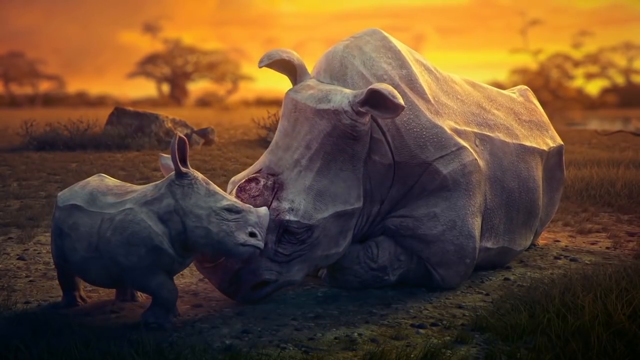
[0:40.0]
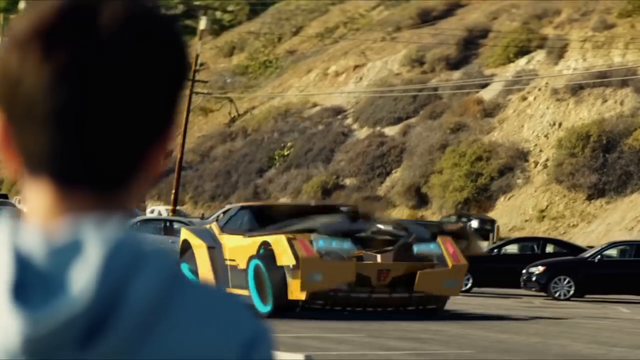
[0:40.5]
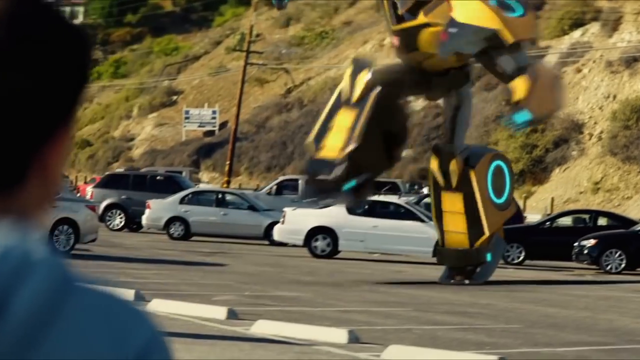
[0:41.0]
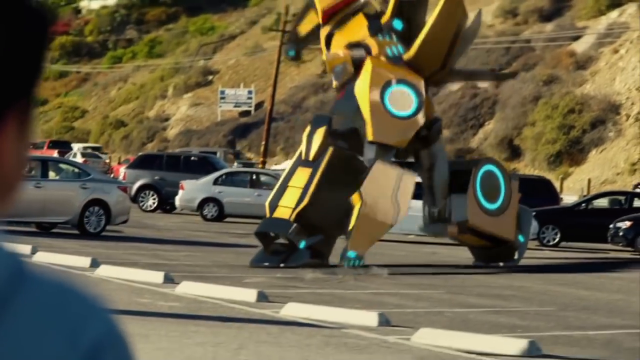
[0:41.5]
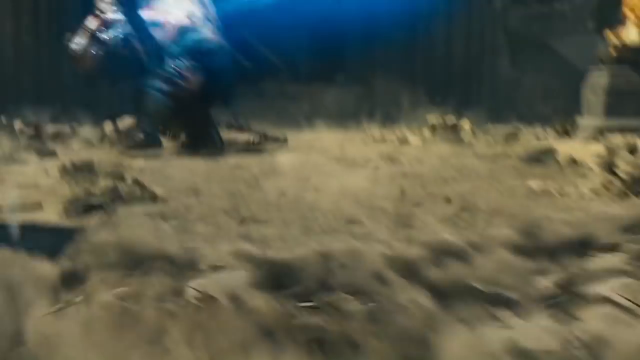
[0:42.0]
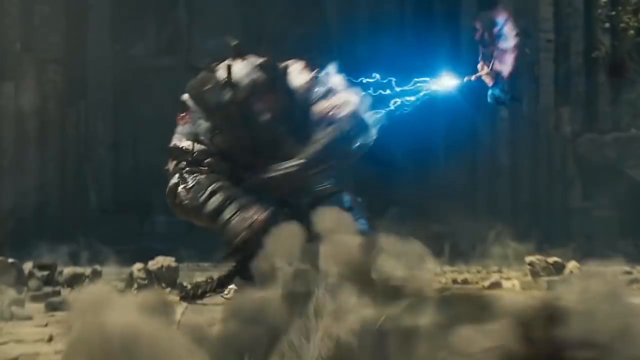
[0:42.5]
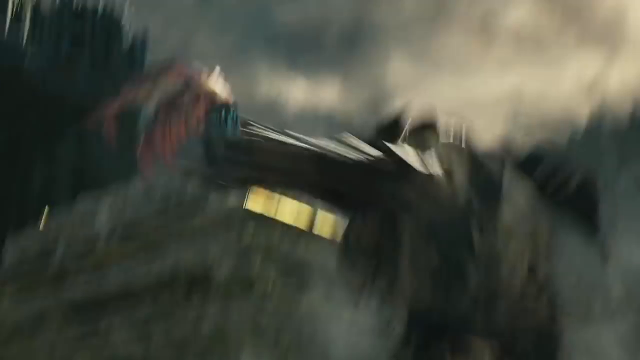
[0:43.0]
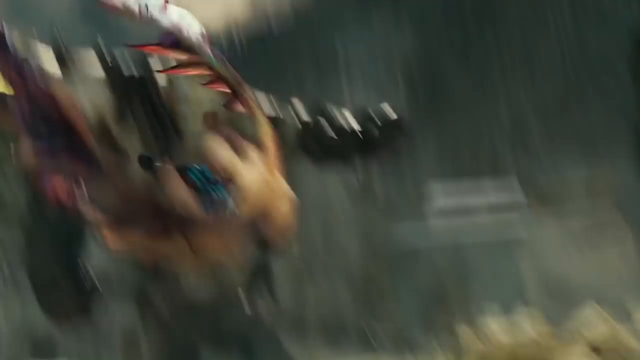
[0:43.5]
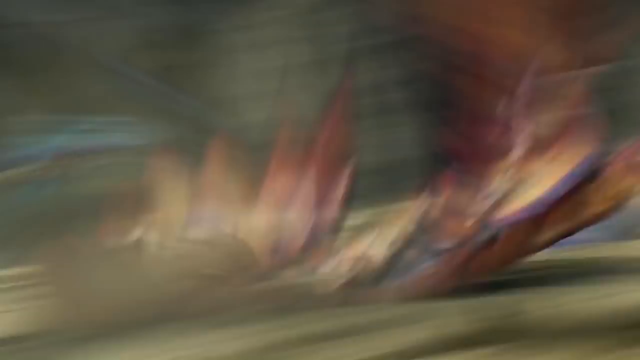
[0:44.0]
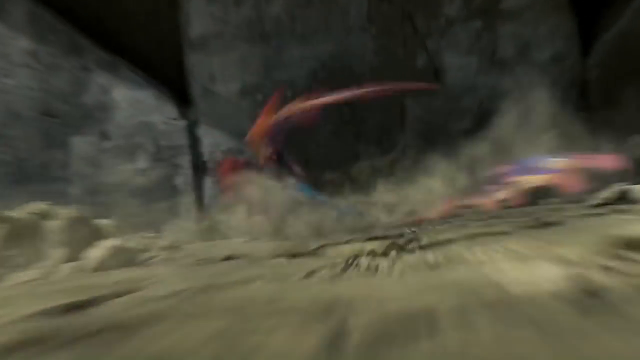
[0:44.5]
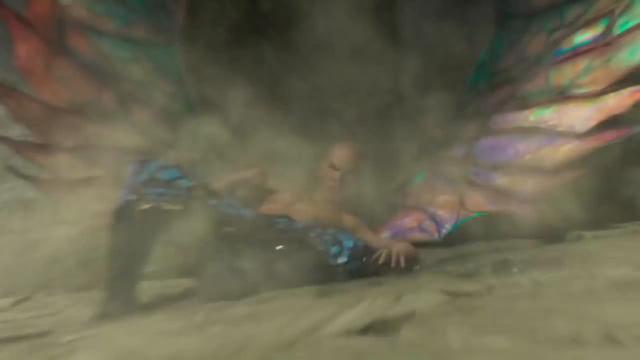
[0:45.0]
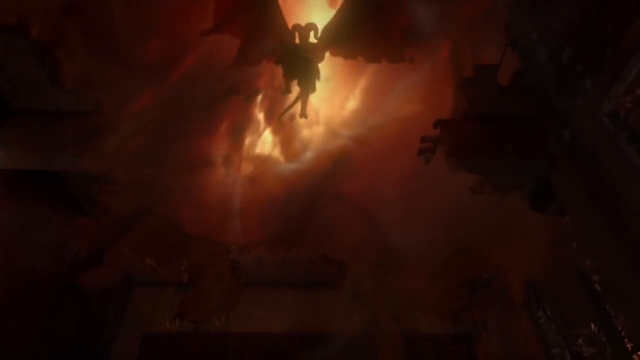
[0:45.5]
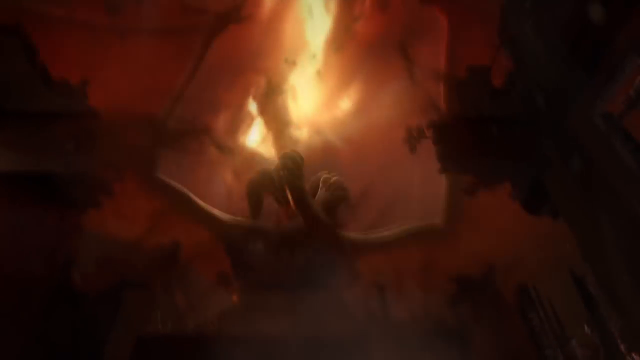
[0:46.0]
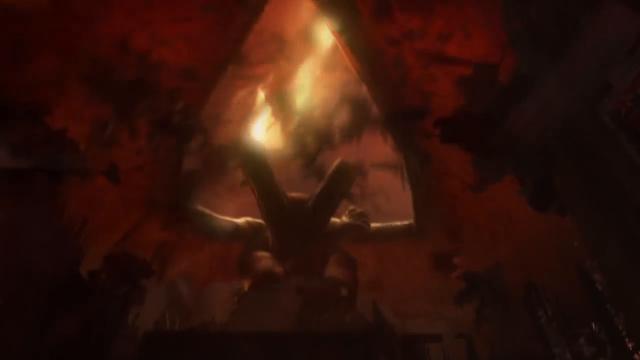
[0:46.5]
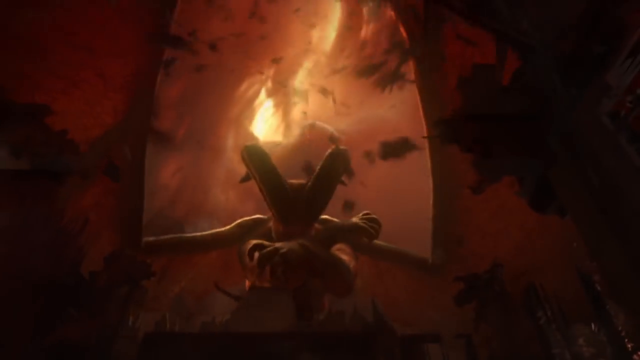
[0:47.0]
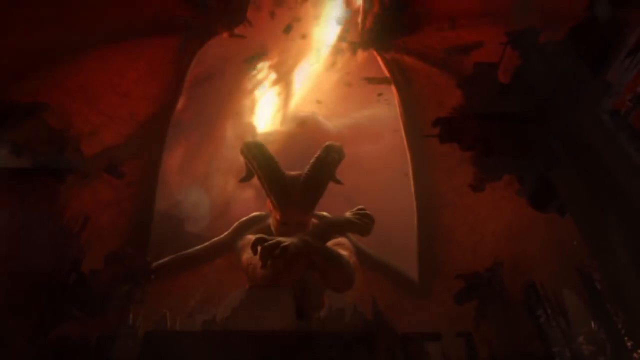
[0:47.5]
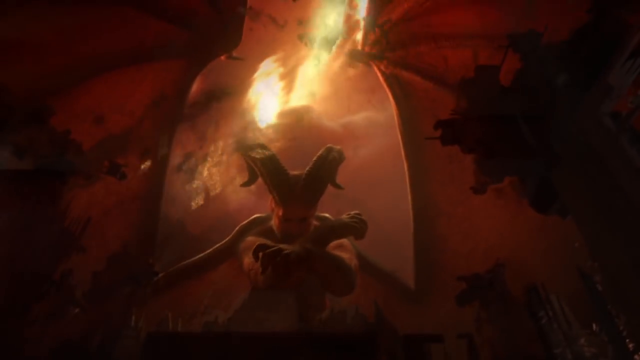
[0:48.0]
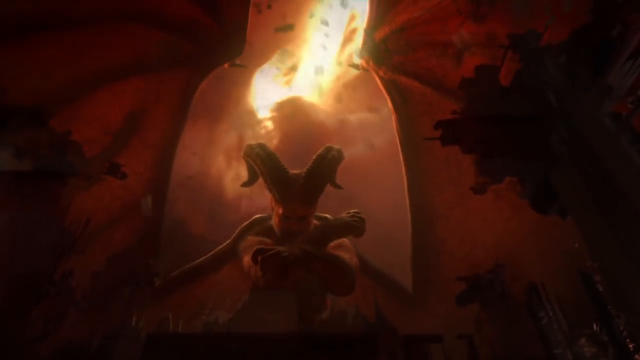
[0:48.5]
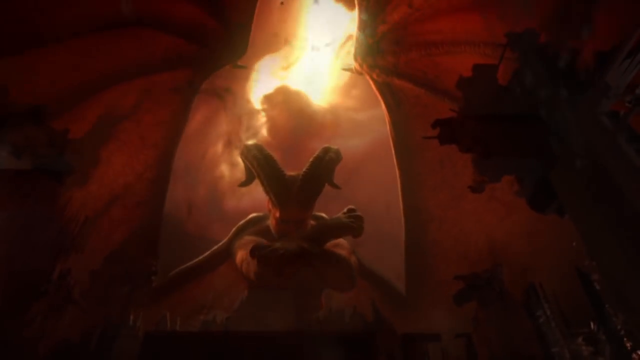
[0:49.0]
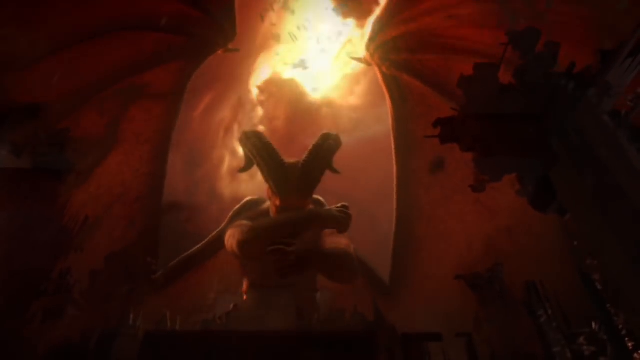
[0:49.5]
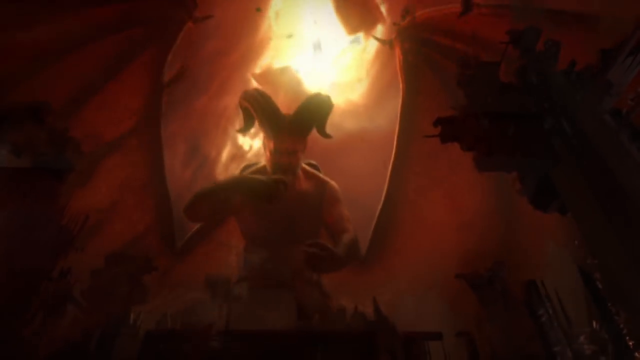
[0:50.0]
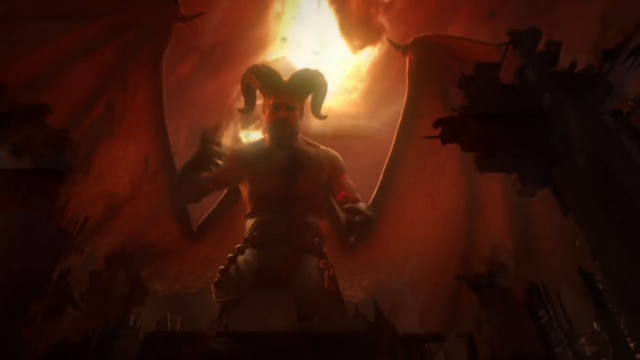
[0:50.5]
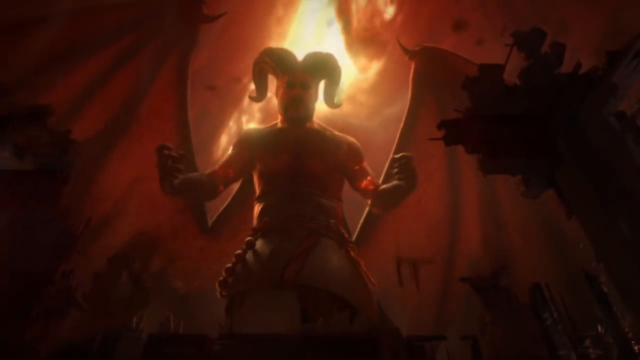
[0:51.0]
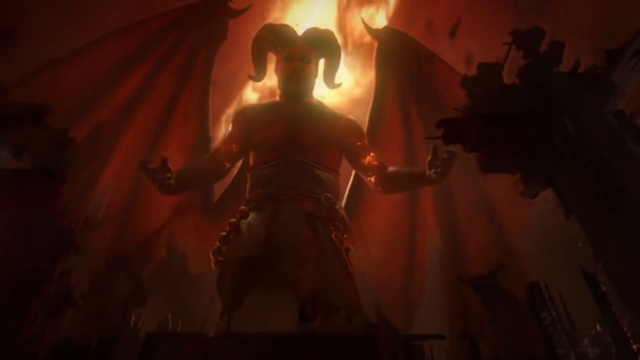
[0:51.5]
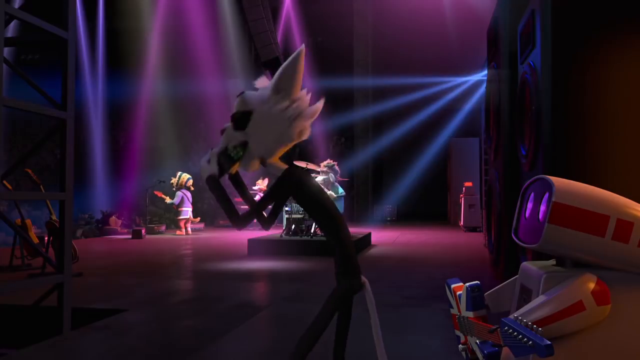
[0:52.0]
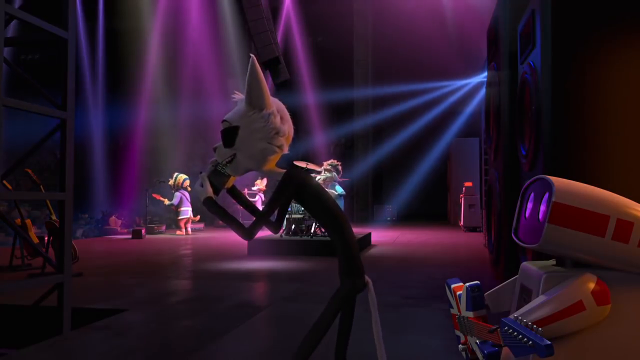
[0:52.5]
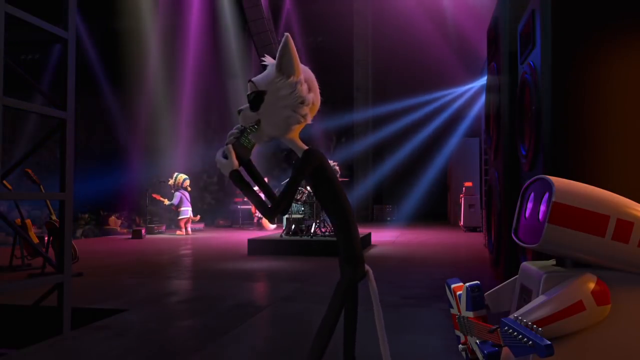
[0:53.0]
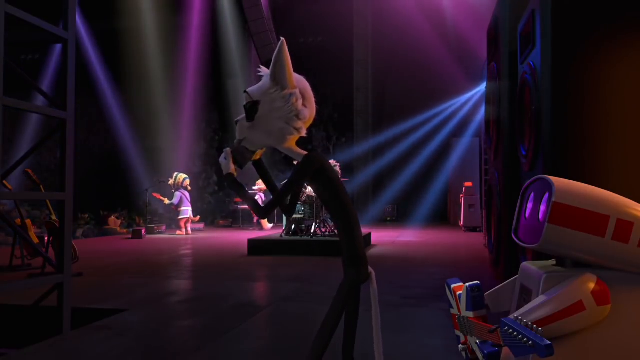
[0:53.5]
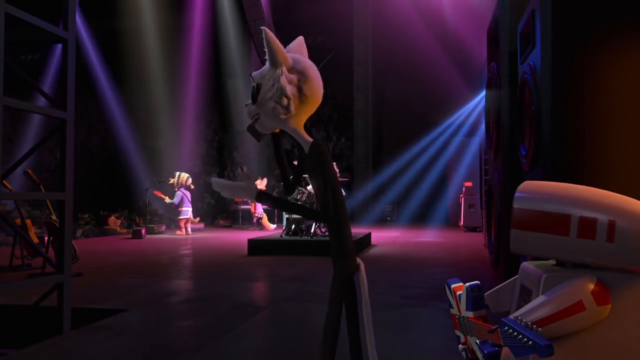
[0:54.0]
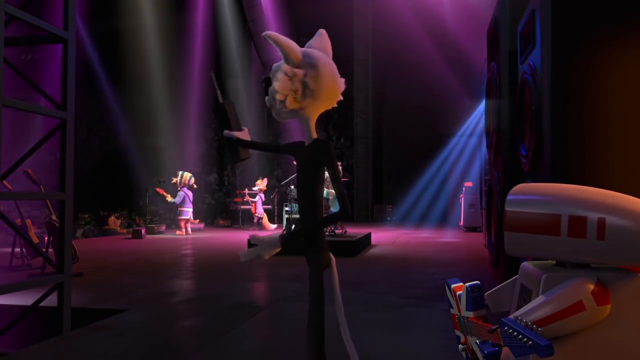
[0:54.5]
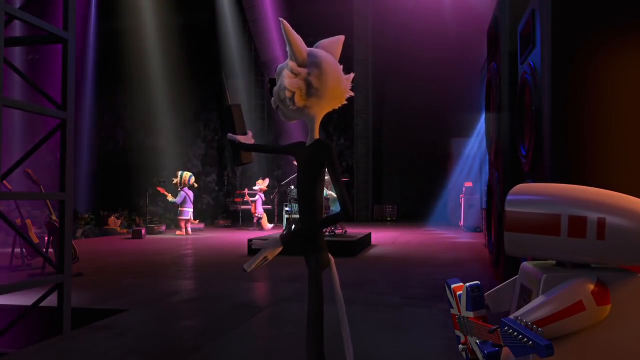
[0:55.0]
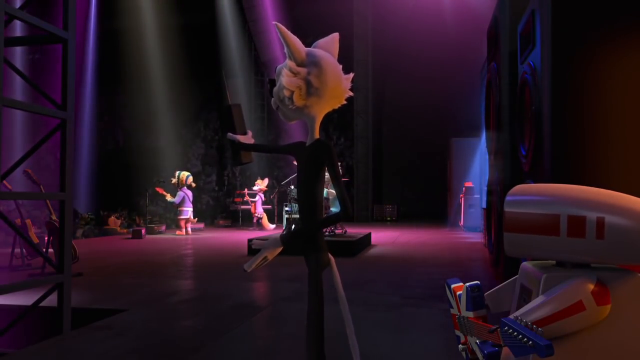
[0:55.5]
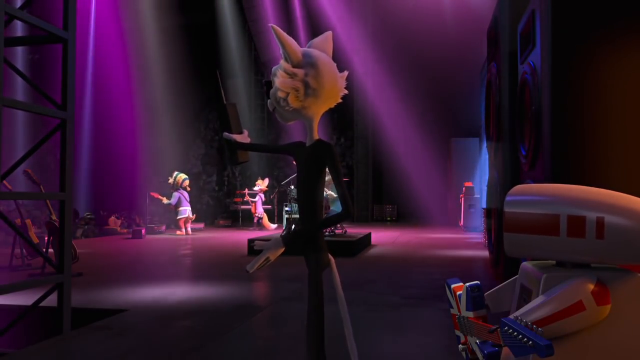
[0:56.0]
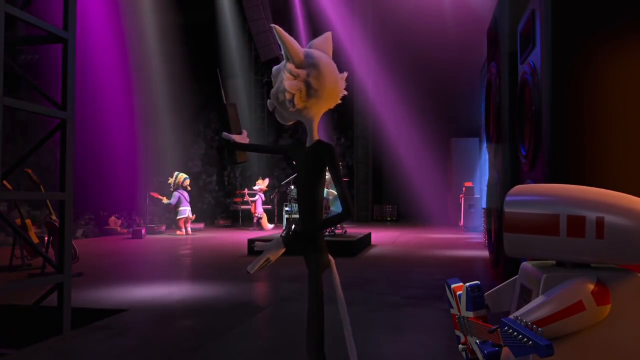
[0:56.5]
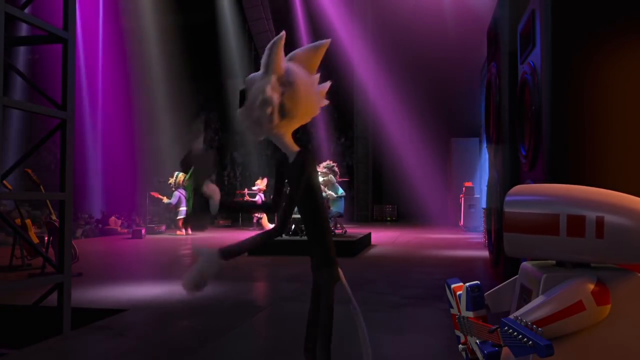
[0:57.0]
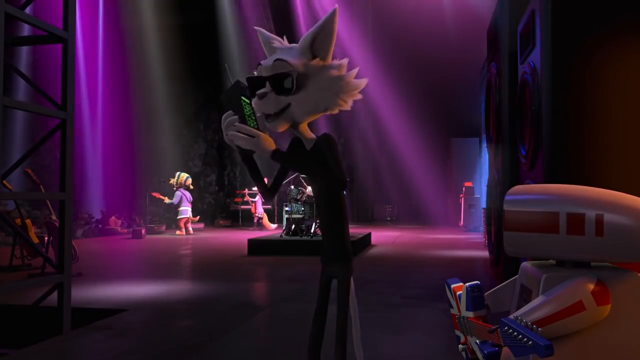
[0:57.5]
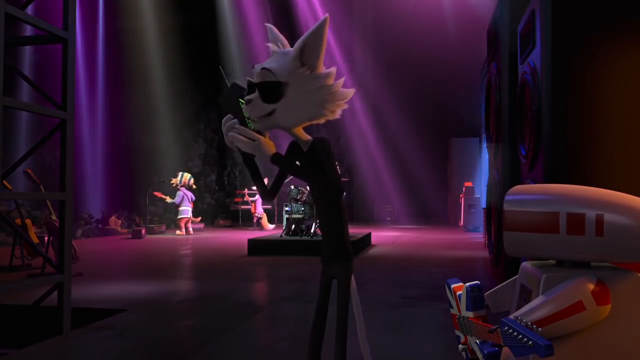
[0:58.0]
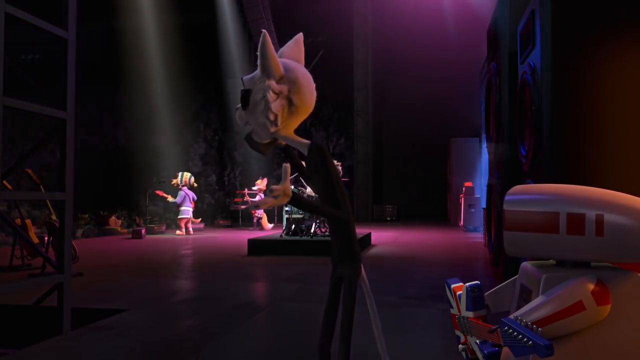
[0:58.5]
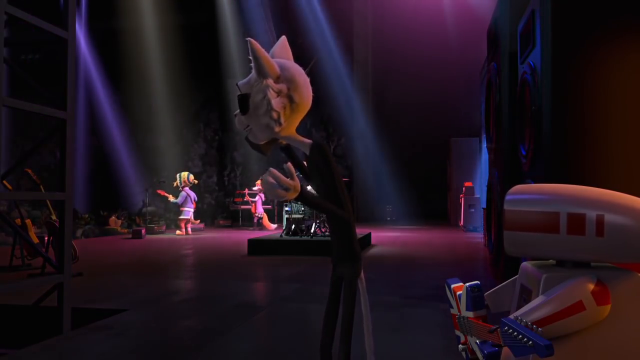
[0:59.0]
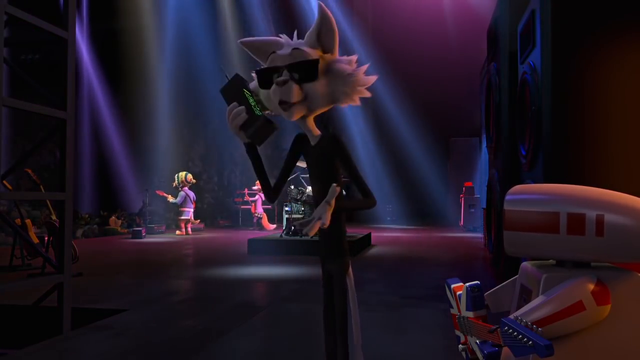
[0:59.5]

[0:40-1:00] A baby rhinoceros nuzzles noses with its mother, whose horn has been cut off by poachers on the plains. The scene suddenly changes to Bumblebee from Transformers transforming for a second, stomping and fighting. The scene changes again to a demon flying backwards through the air, which makes it look like the demon and the Transformer are fighting, though the scenes are separate. Another demon comes down with large wings and hooked horns, looking much like depictions of Satan, with flames shooting up into the sky behind him. It then cuts back to the stage, where the white cat in the black suit is talking on the phone and running the band. He is excited and holds the phone up so whoever he is talking to can hear the band performing and the crowd's response.